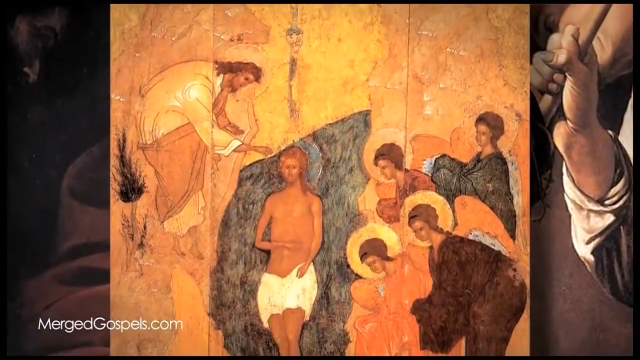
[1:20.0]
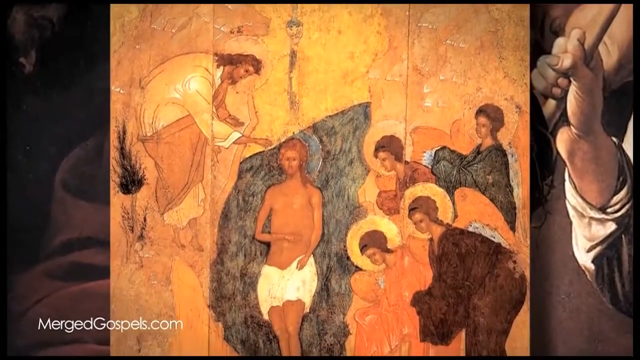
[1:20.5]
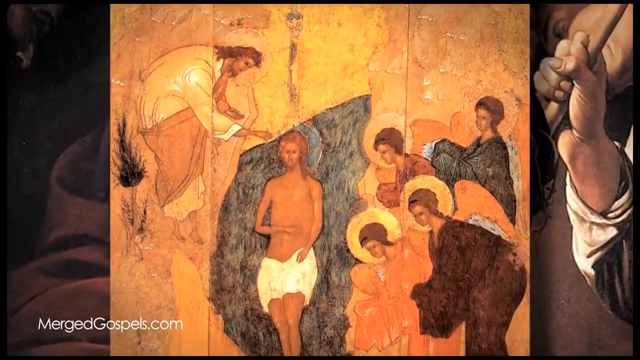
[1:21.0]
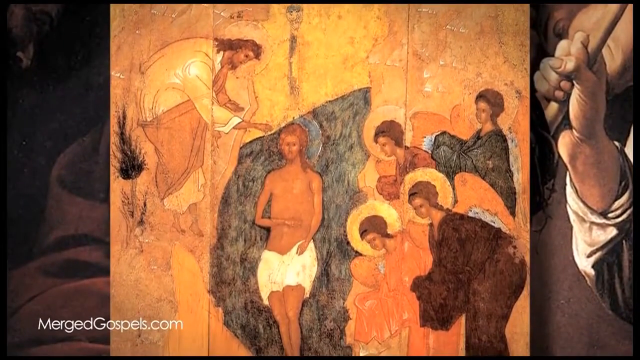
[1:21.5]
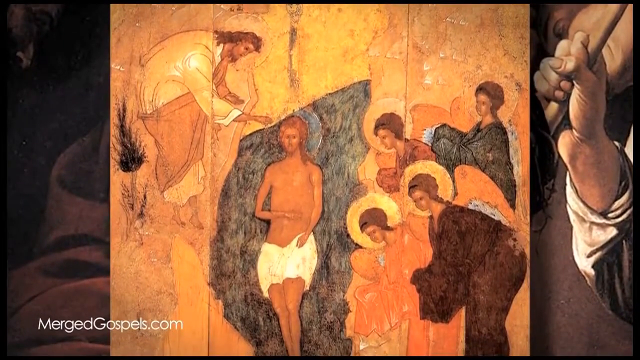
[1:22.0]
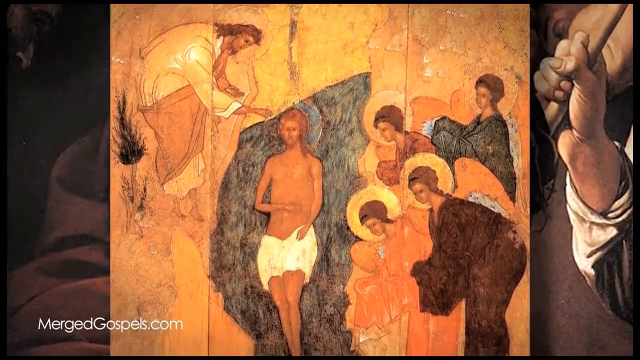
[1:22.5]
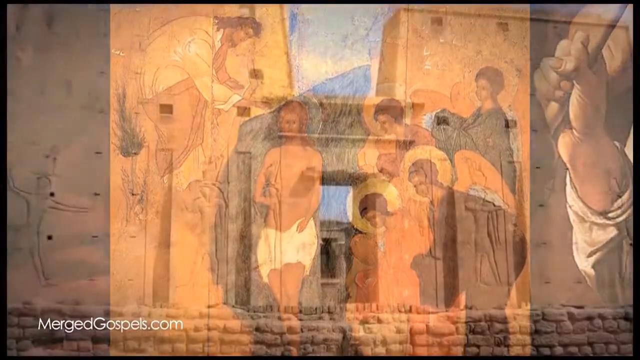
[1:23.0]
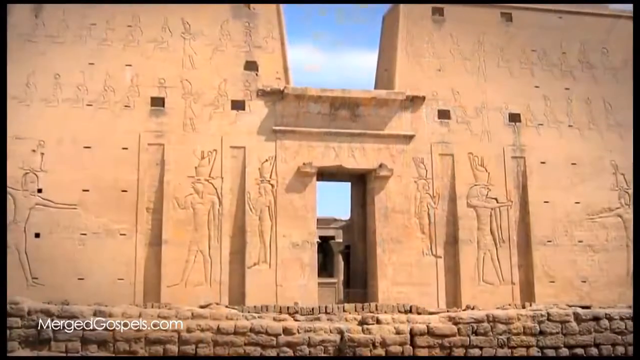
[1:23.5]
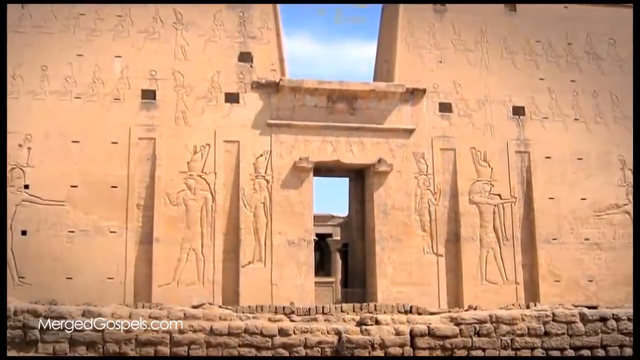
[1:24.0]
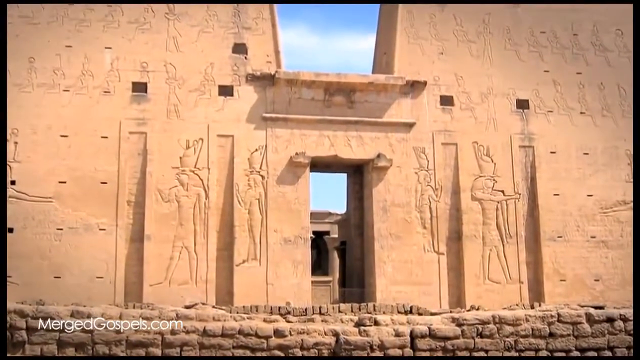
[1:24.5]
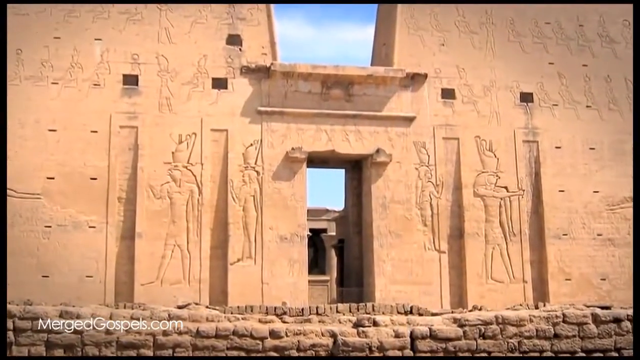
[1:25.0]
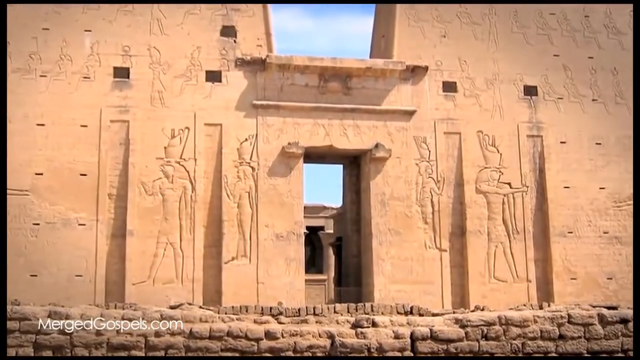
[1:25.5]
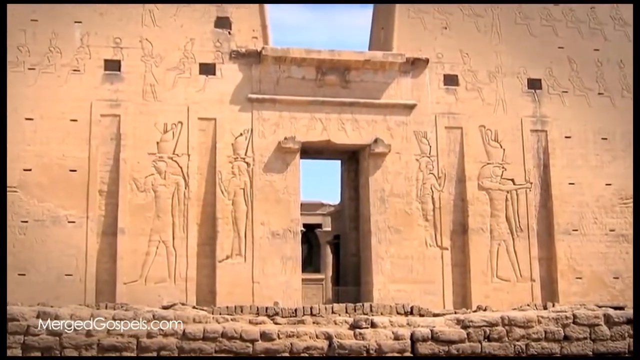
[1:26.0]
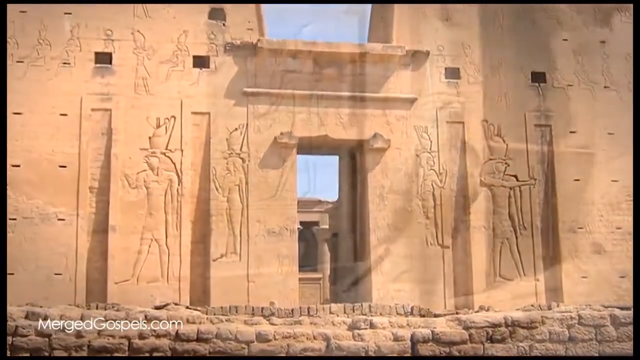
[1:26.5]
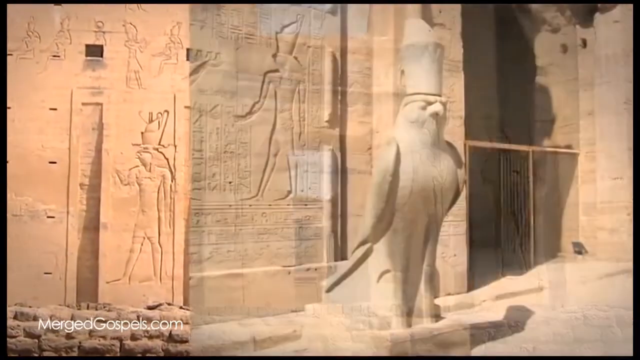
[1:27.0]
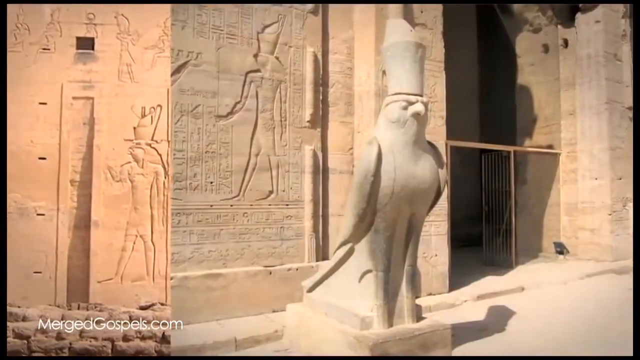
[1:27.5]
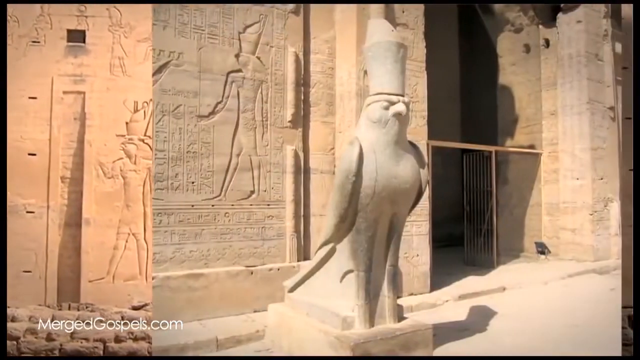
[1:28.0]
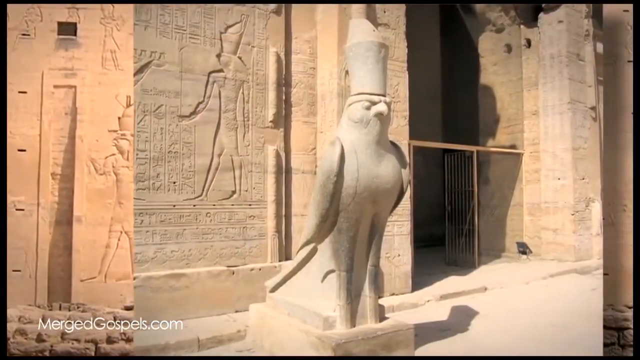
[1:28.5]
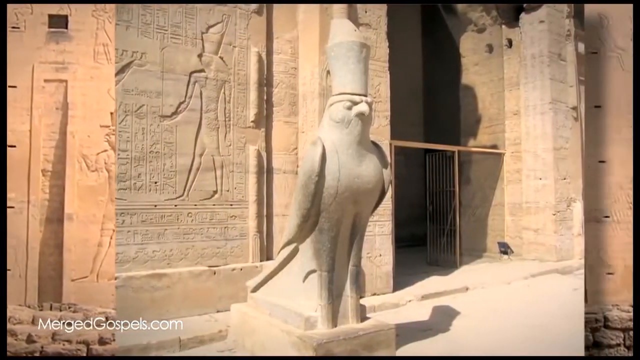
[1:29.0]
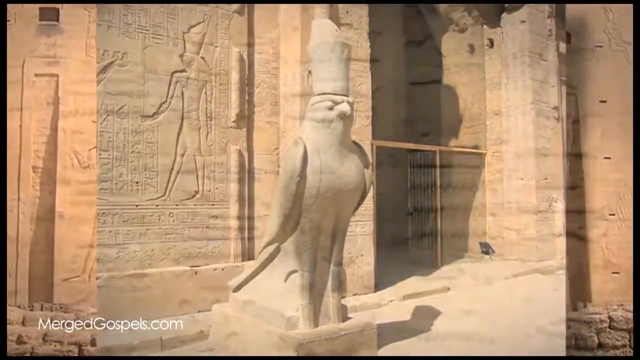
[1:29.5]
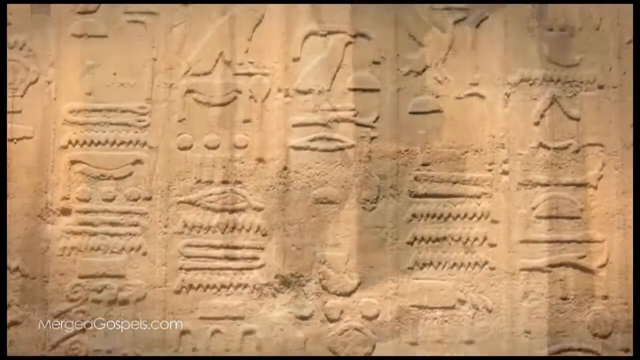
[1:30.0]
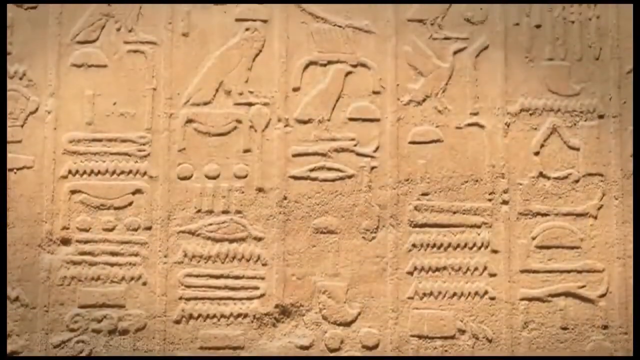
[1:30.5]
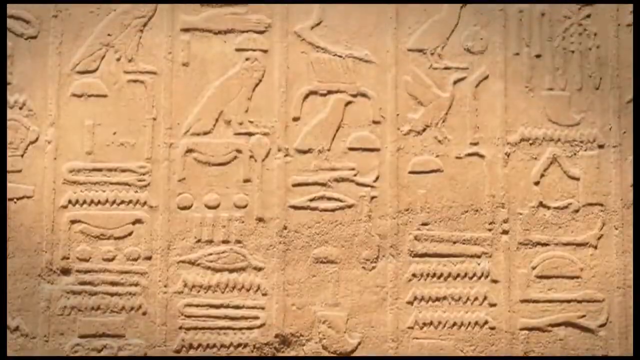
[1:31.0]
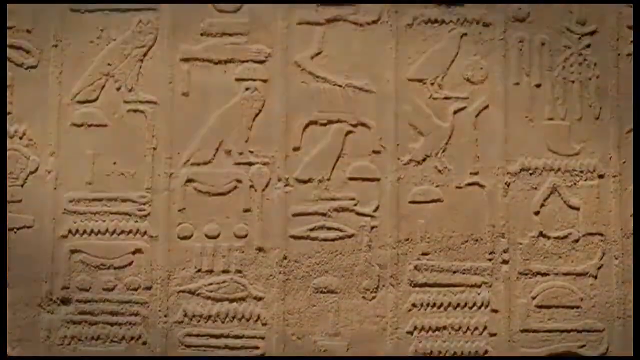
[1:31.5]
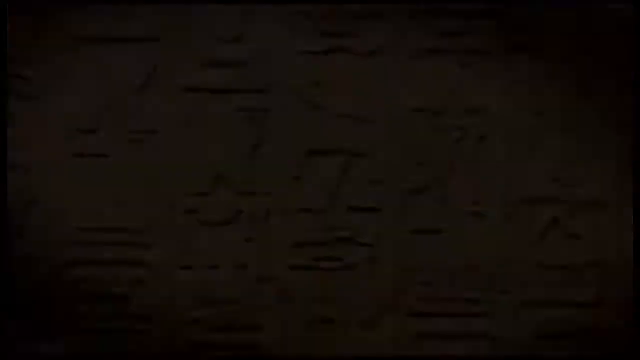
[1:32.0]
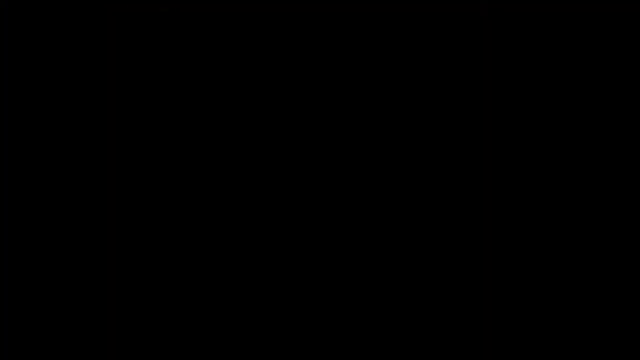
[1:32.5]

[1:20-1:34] An old-style painting shows Jesus at the resurrection, exiting the cave. He has a halo and a white cloth covering his genitals. To the left of the image is a man who is bowing, also with a halo. To the right are four women, one of whom is presumably Mary Madeline; they each have halos and are bowing at Jesus in the middle of the image. The camera pans down to show more of the bottom of the image, which just extends the legs of the people who are bowing. Next is the outside of a building in Egypt, with a large door carved in the middle and two carved figures on either side; the carved figures on the left-hand side look to the left and those on the right-hand side look to the right. The camera slowly fades in towards the door. The image is then replaced by an image of an eagle, followed by further hieroglyphics, and the screen turns to black.